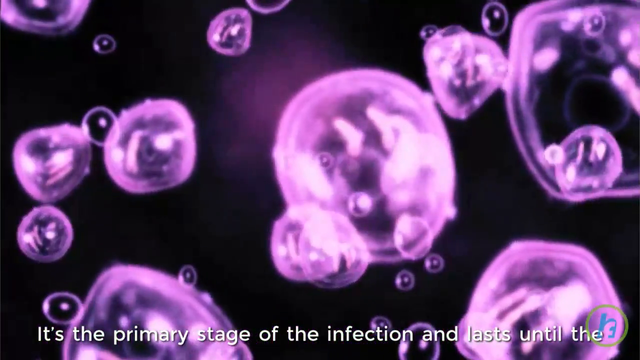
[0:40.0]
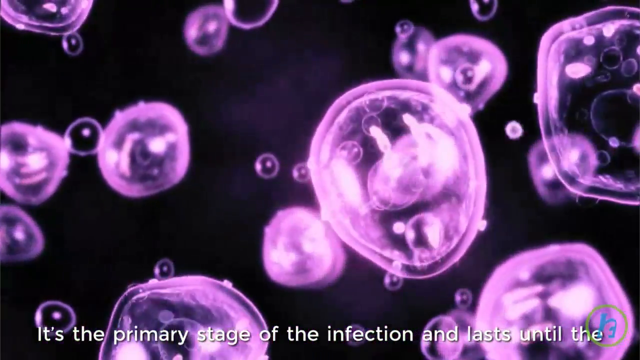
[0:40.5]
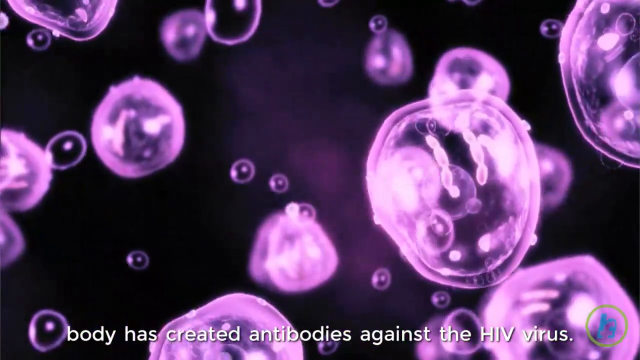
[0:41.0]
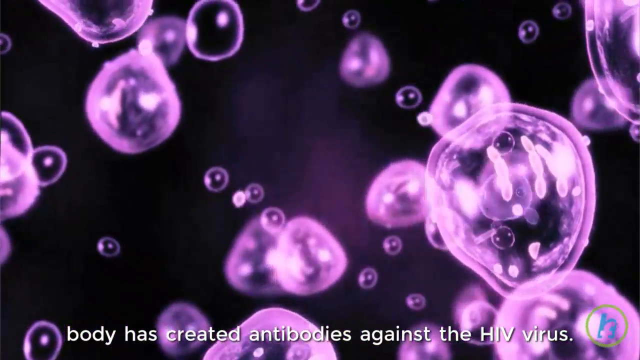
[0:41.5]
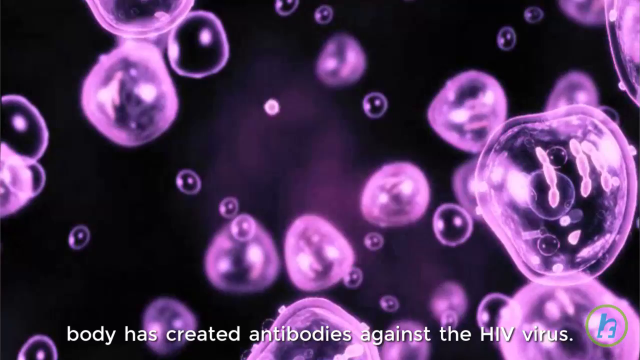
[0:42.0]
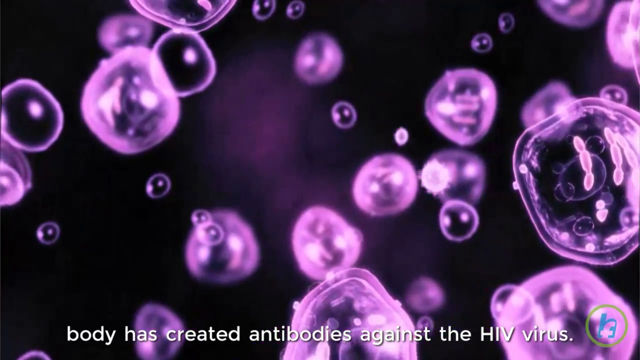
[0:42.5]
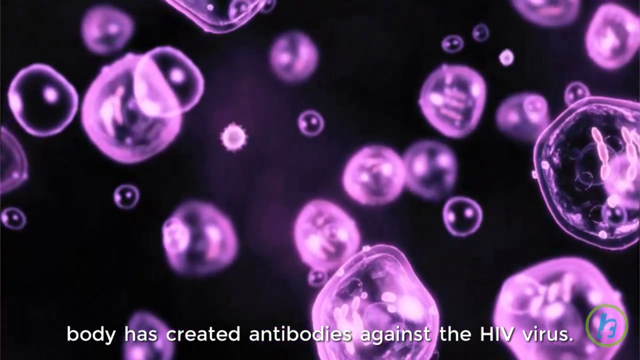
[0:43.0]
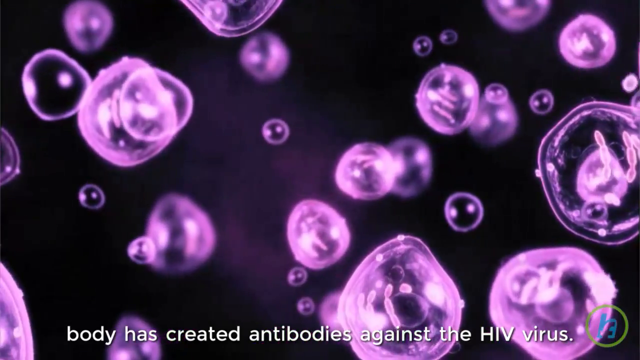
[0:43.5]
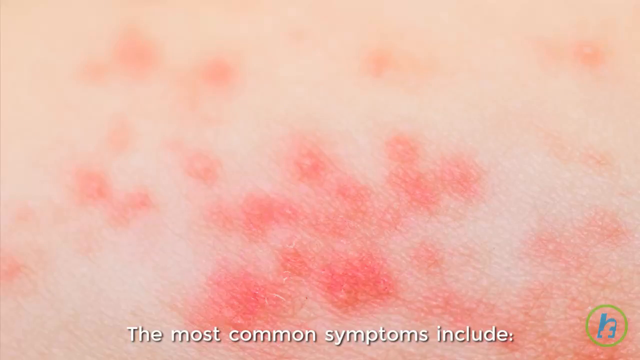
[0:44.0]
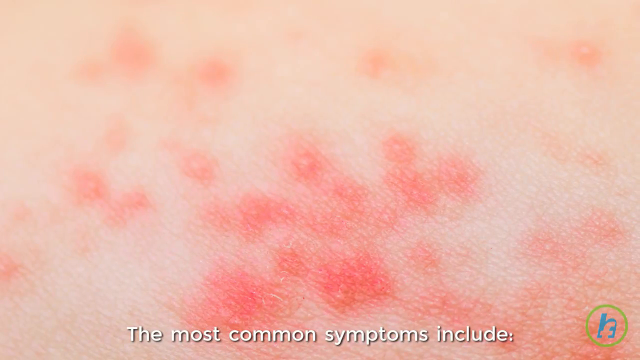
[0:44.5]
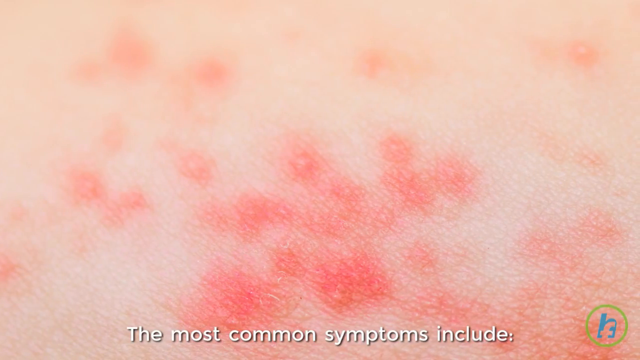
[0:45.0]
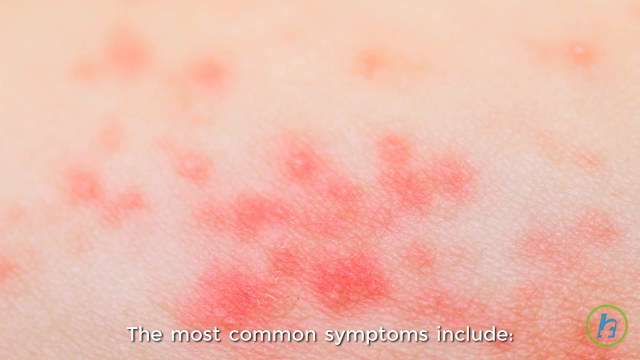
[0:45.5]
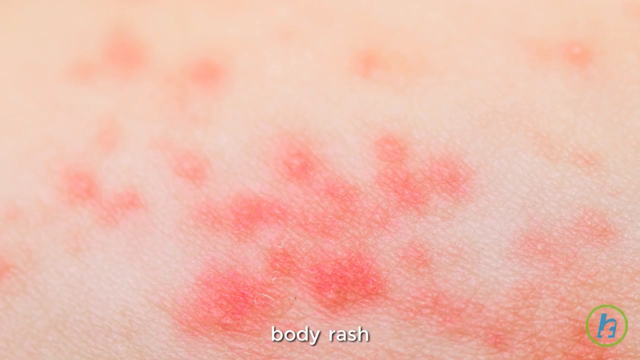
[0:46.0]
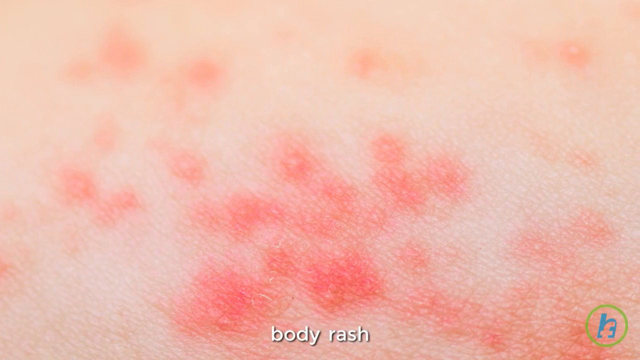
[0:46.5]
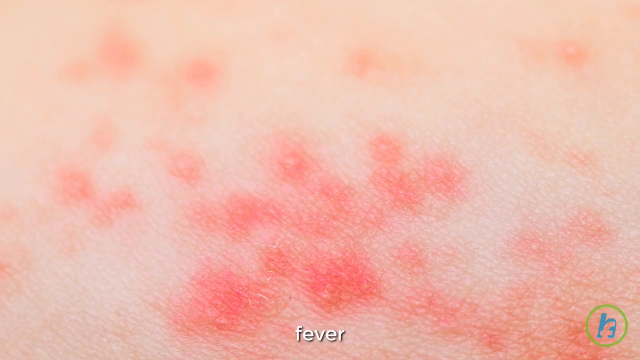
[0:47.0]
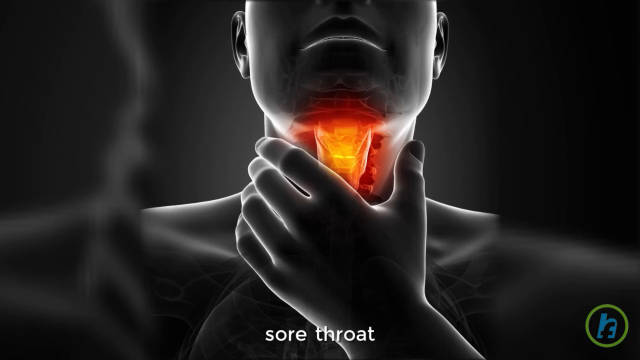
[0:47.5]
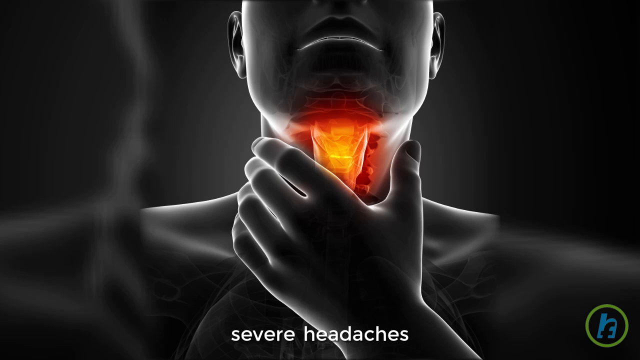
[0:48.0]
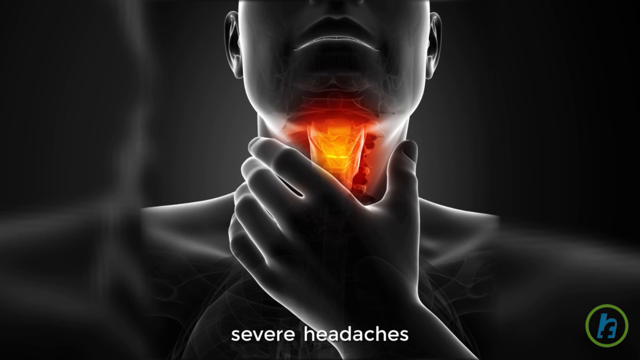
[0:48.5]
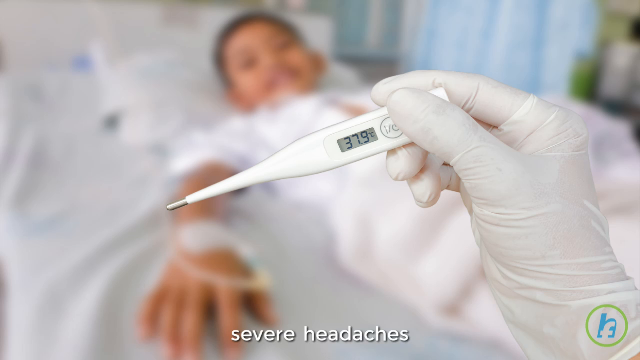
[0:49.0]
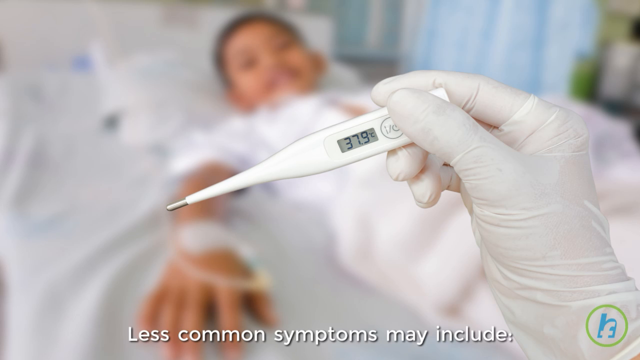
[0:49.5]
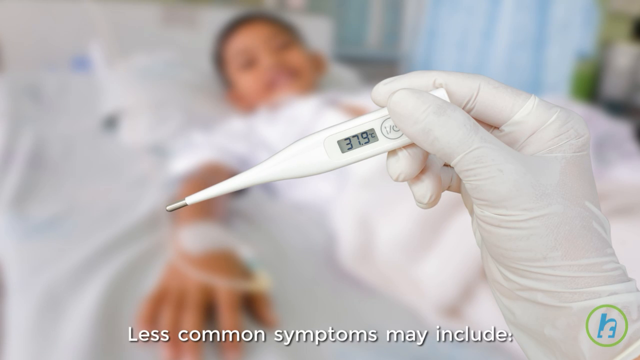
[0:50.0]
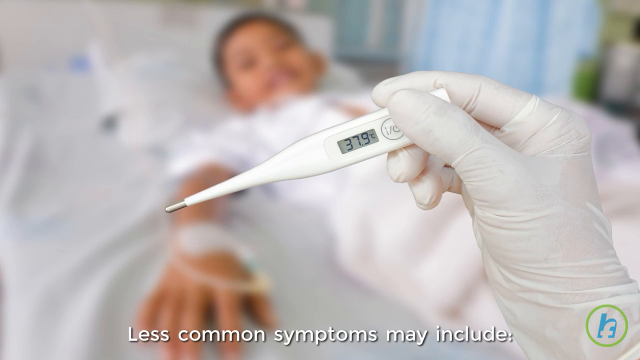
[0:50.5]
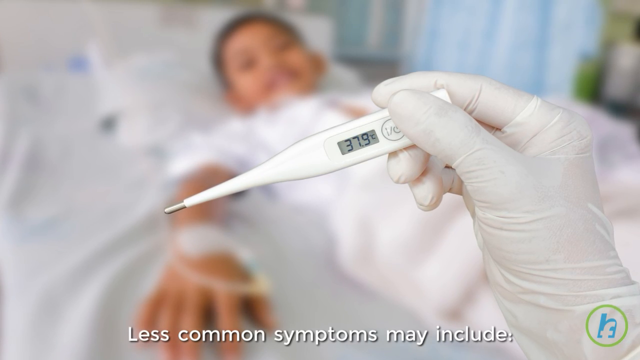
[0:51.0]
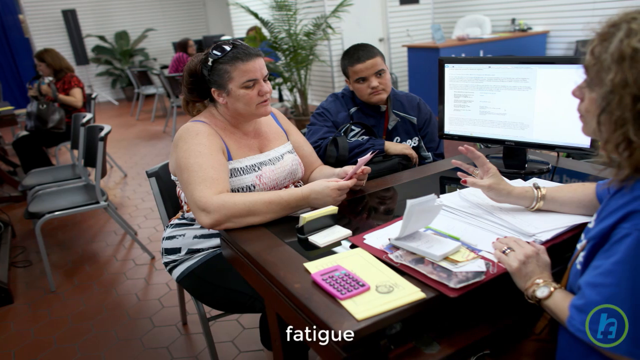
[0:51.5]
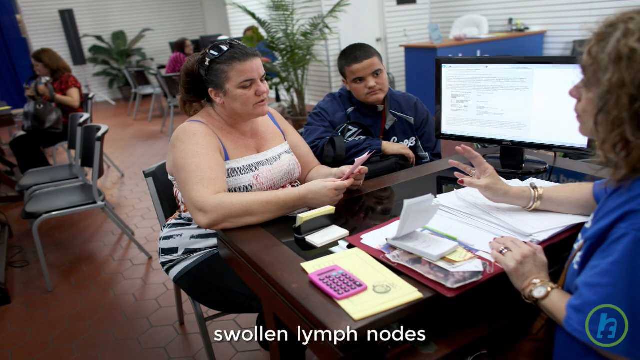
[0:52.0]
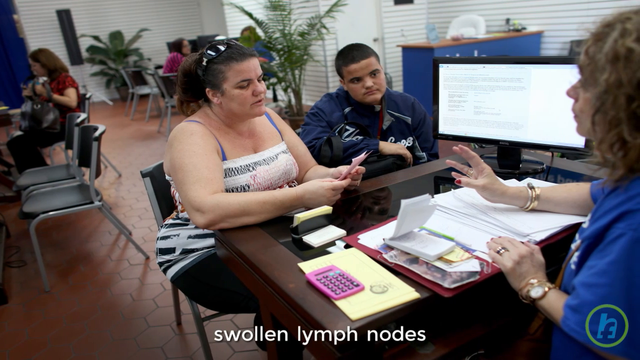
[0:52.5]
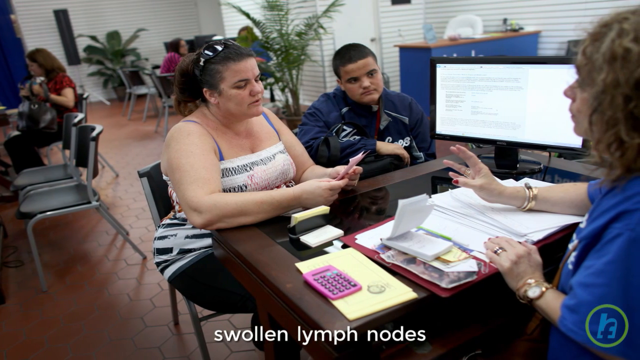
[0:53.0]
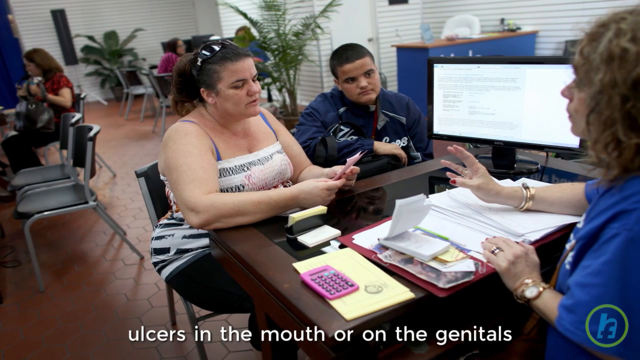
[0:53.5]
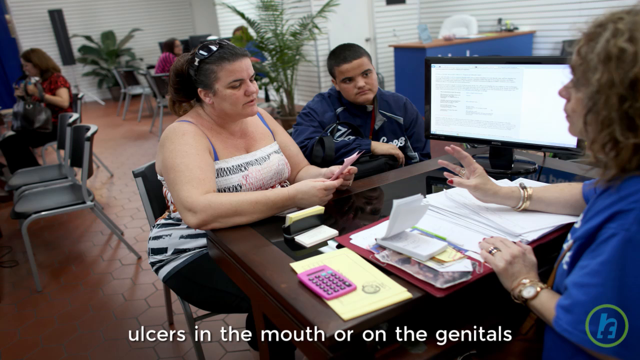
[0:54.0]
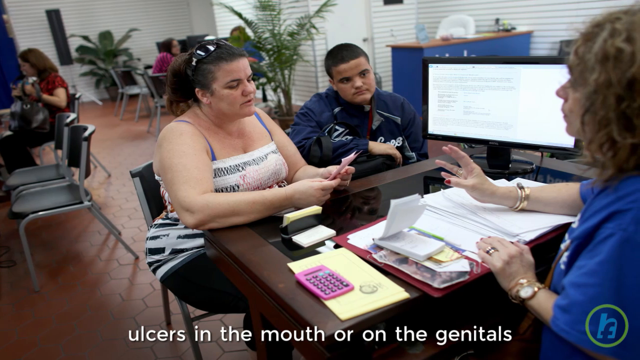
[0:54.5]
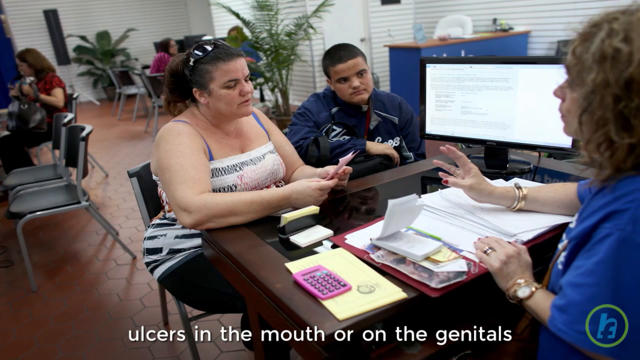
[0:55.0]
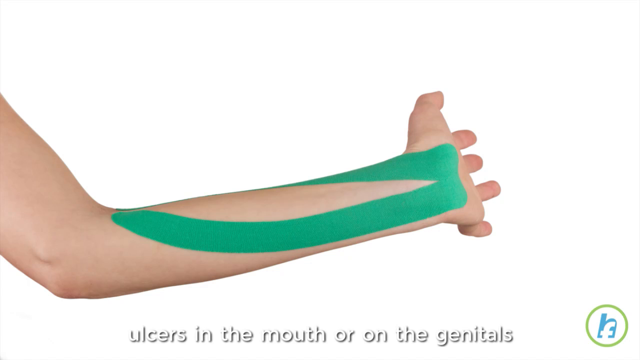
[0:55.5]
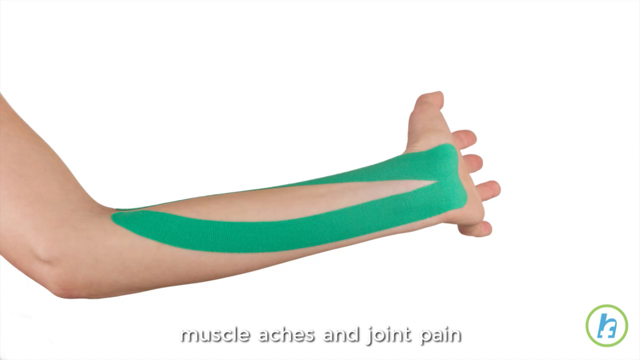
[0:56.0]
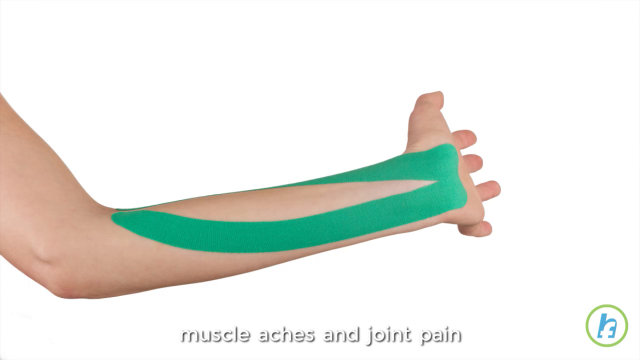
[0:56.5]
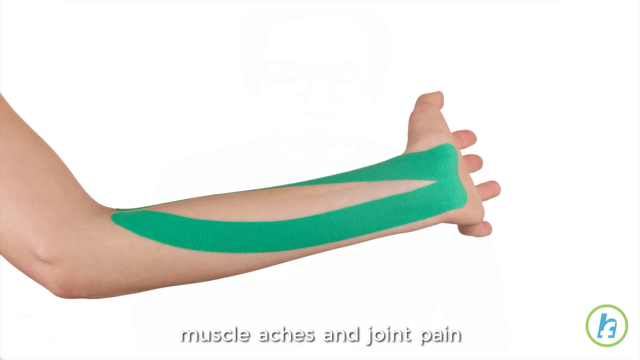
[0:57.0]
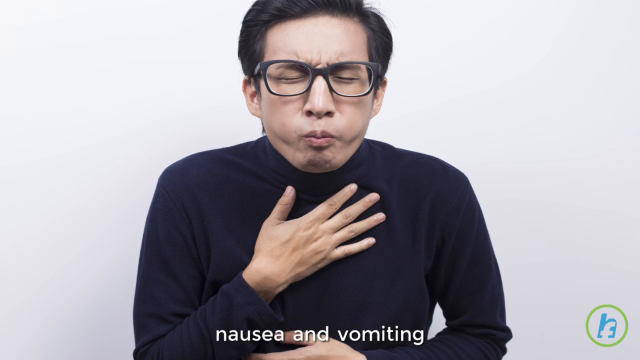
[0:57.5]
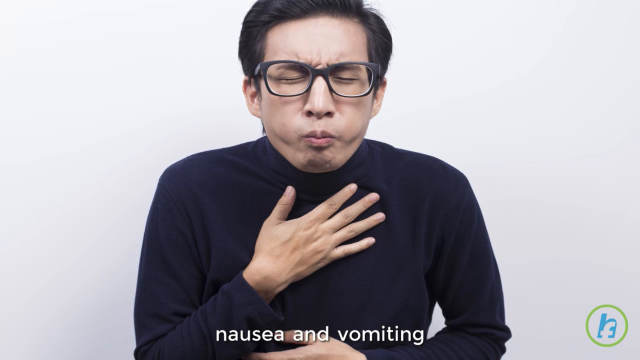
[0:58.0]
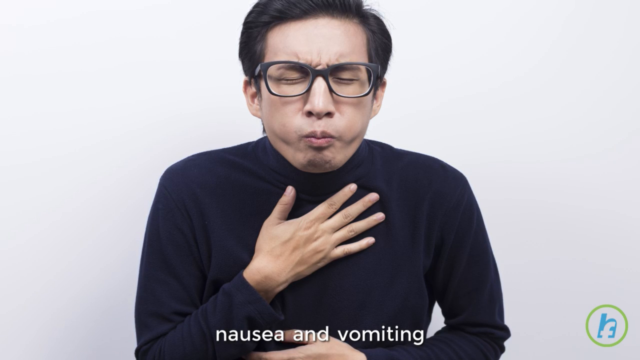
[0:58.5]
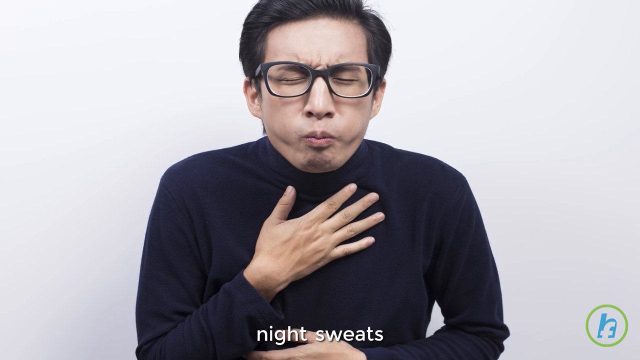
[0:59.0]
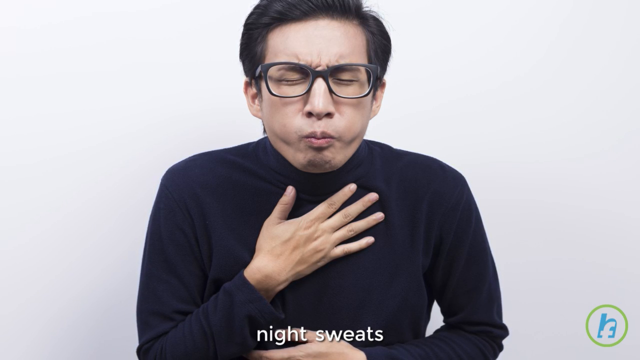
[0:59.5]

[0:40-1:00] A computer-generated image shows a black backdrop with bubbles on the screen that appear kind of purple and iridescent. Some are big and some are small; they move around kind of slowly, bouncing off each other and kind of swimming around the screen. Next comes a still photo of what looks like maybe human skin, very pale, with red splotches that look like clusters maybe of pimples or some kind of rash. Then a computer-generated image shows a human throat that looks to be male, with a masculine hand grasping it. The esophagus part of the throat that comes into the mouth is colored bright orange and yellow, making it appear to be on fire, seemingly meant to convey a sore throat. Then an image of a little boy in a hospital bed appears.